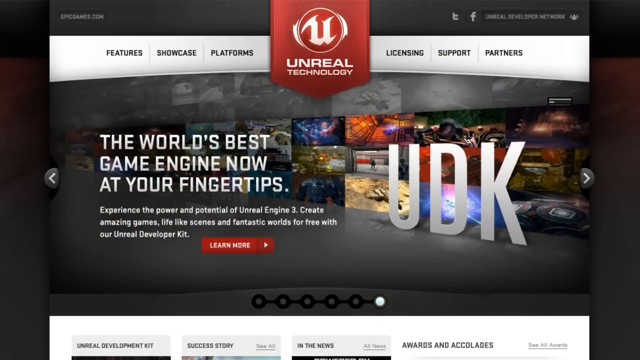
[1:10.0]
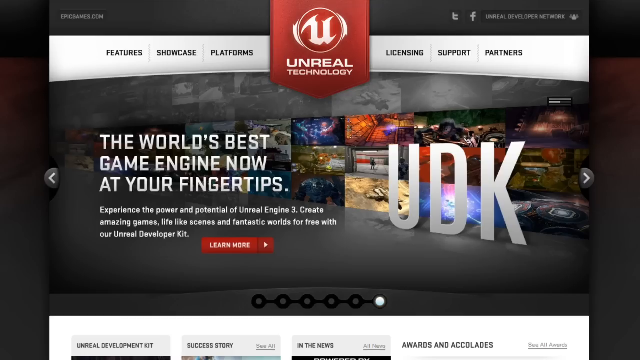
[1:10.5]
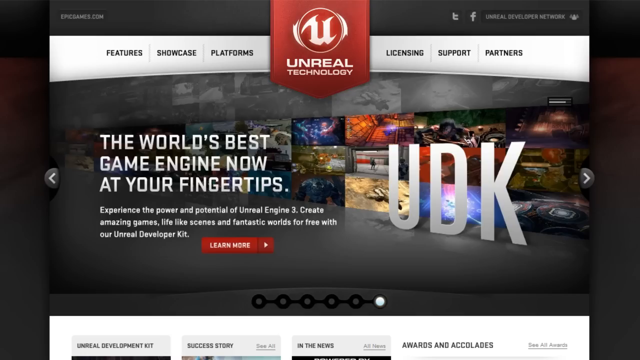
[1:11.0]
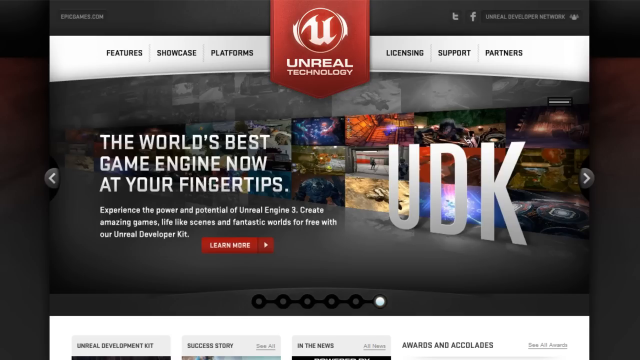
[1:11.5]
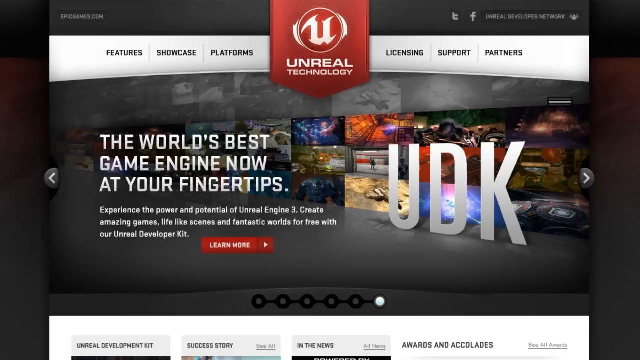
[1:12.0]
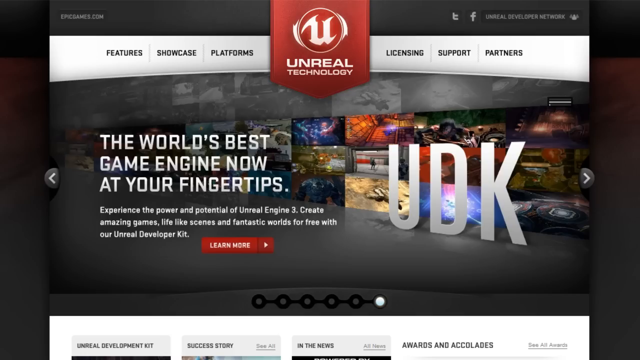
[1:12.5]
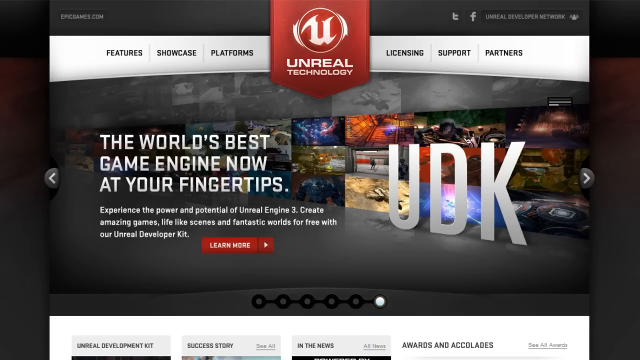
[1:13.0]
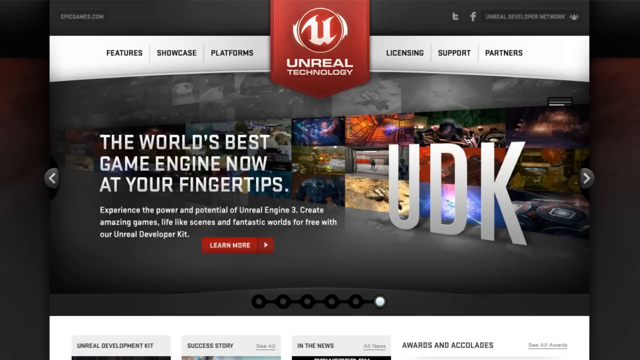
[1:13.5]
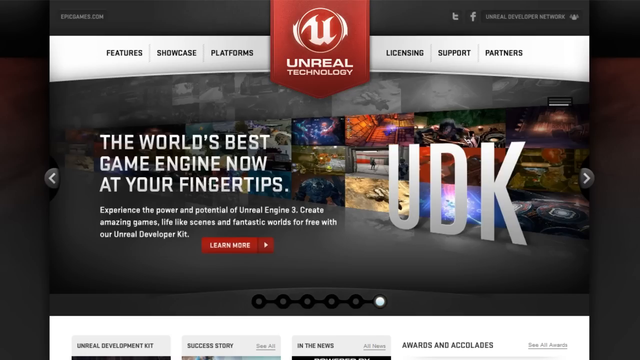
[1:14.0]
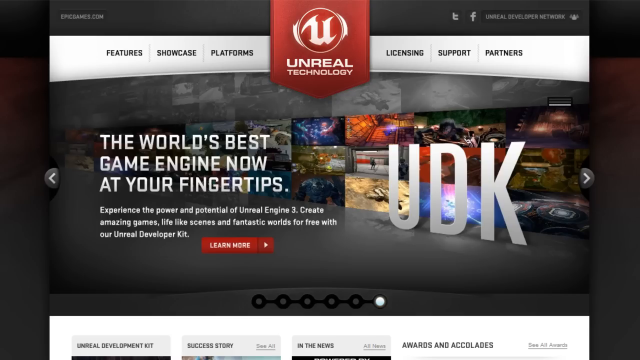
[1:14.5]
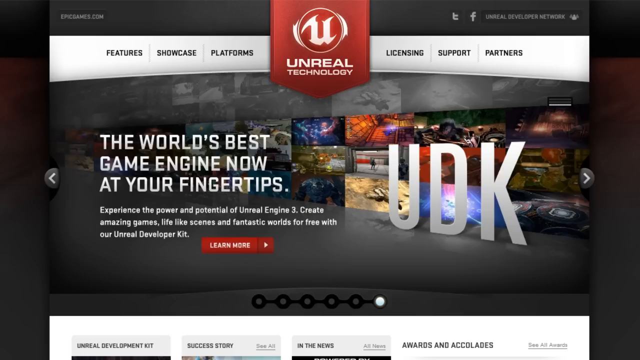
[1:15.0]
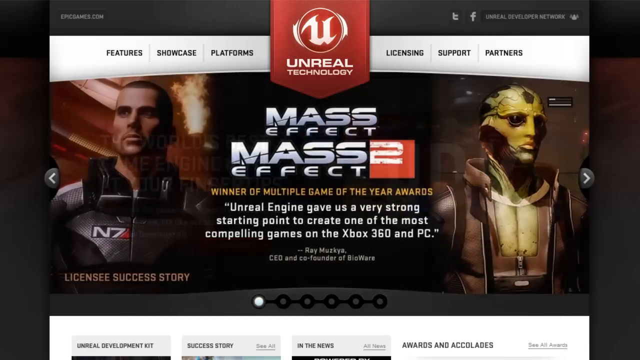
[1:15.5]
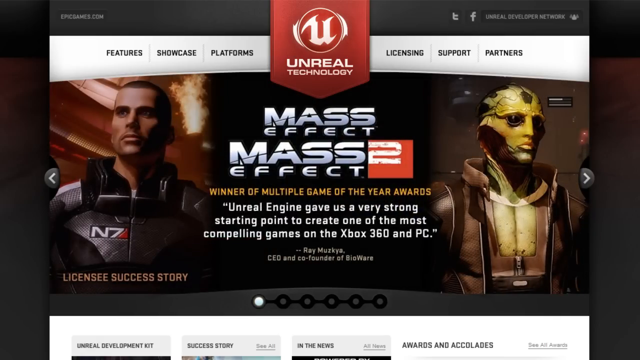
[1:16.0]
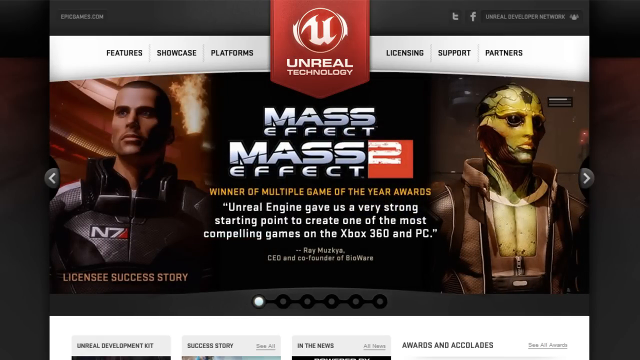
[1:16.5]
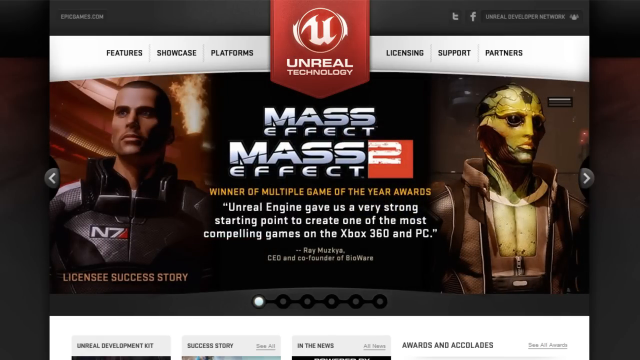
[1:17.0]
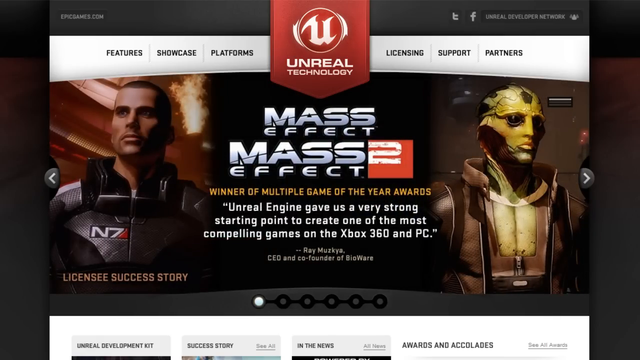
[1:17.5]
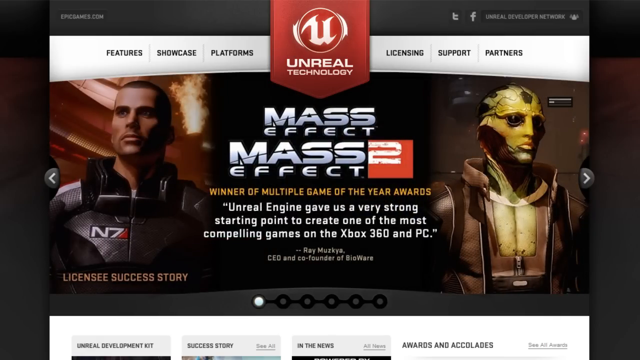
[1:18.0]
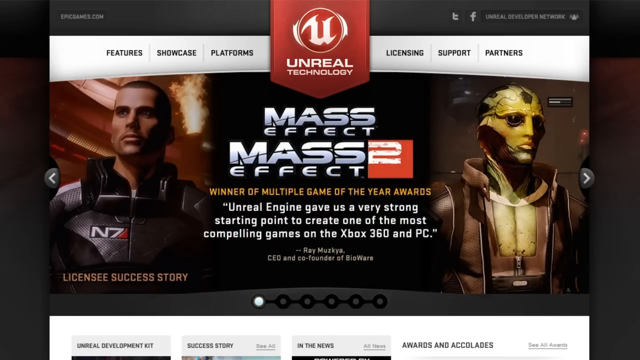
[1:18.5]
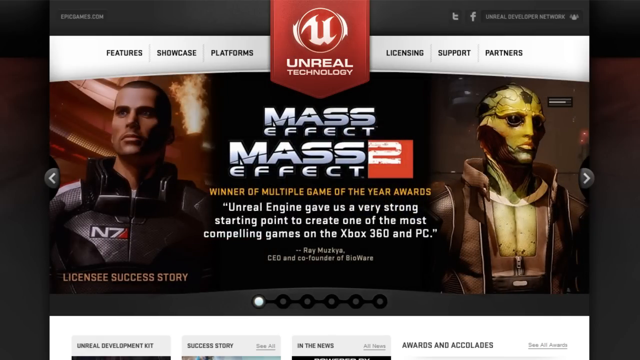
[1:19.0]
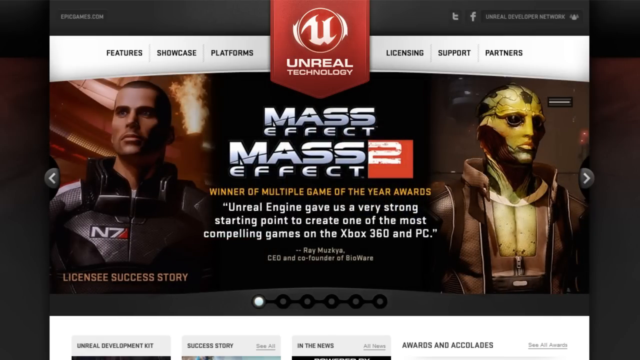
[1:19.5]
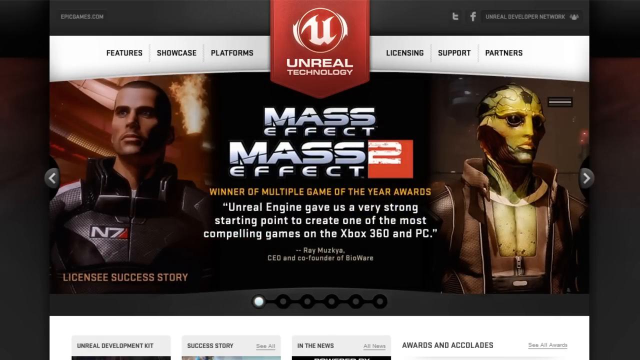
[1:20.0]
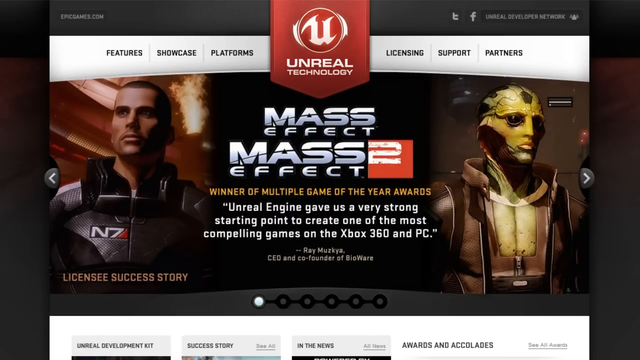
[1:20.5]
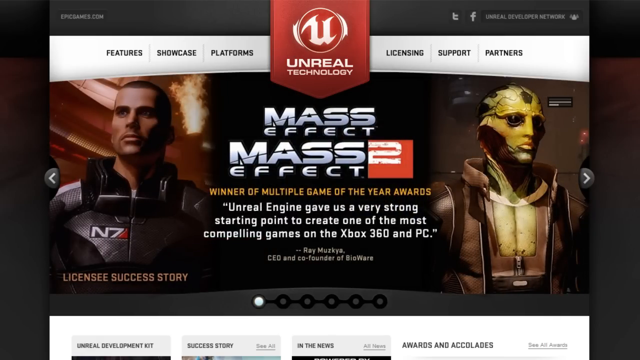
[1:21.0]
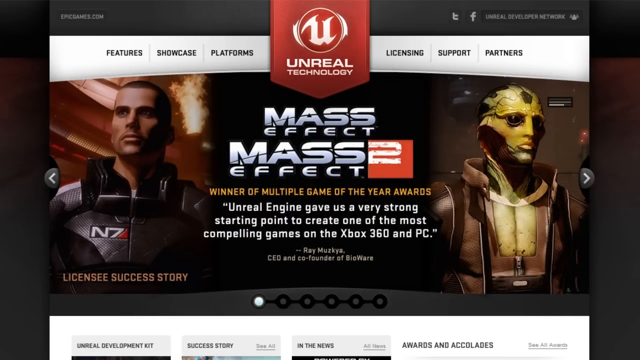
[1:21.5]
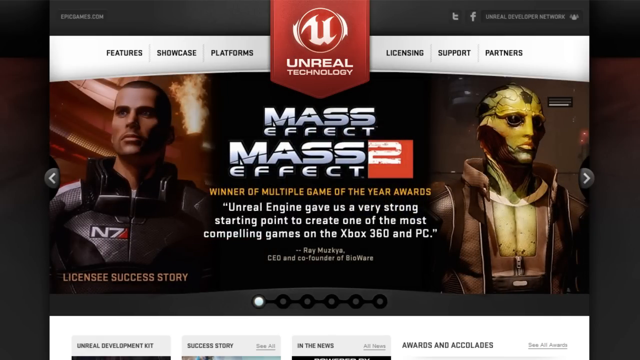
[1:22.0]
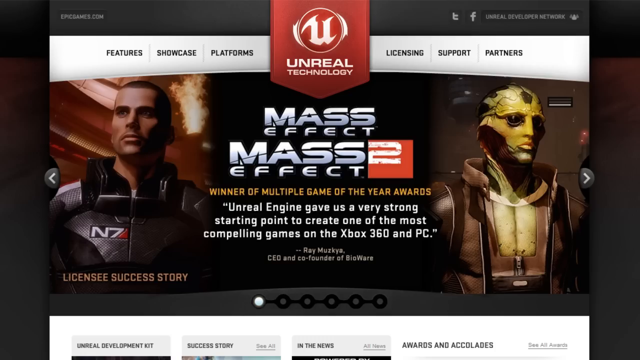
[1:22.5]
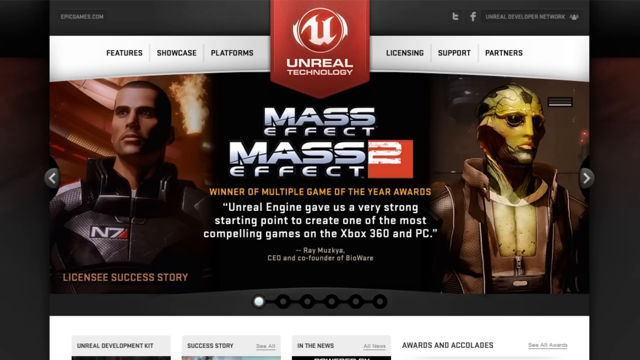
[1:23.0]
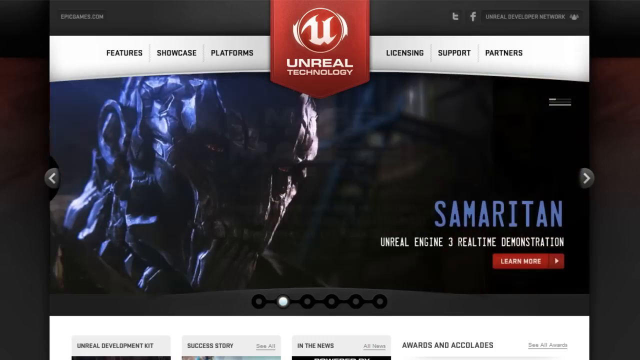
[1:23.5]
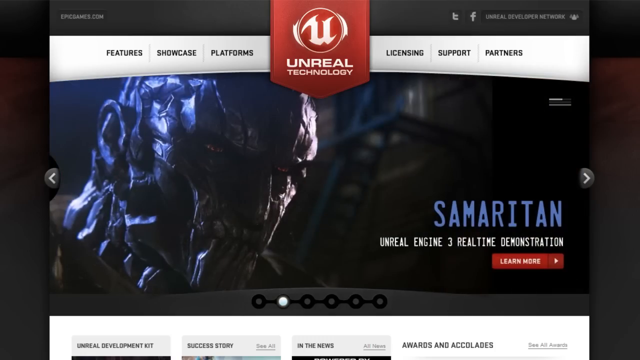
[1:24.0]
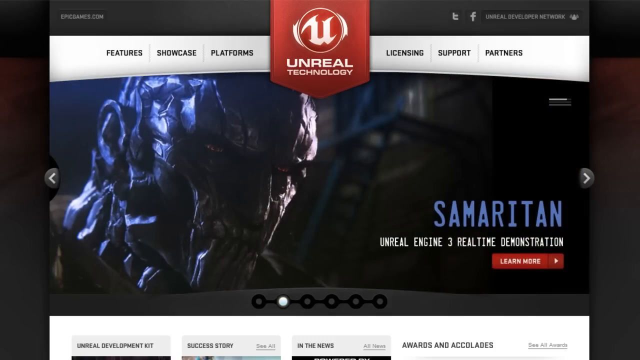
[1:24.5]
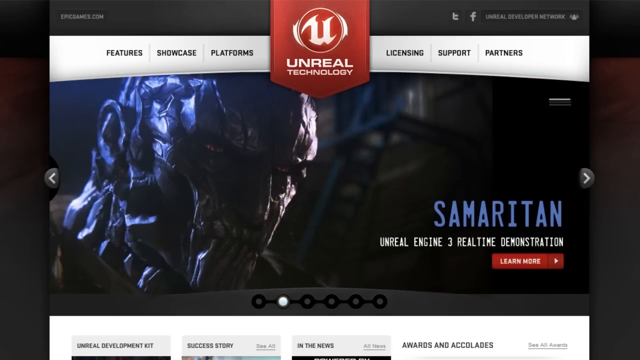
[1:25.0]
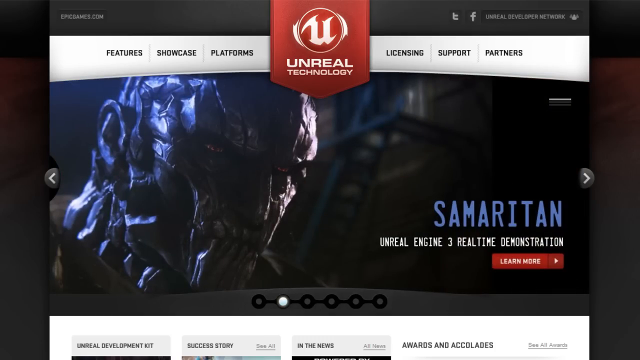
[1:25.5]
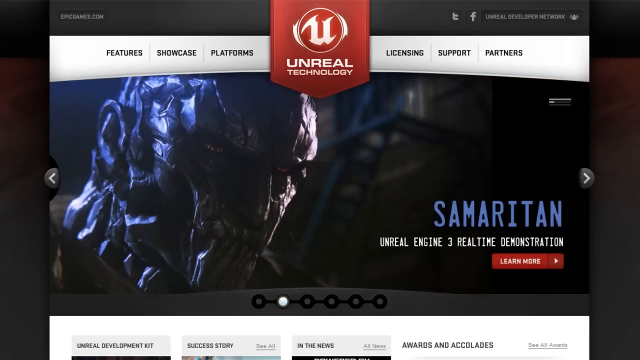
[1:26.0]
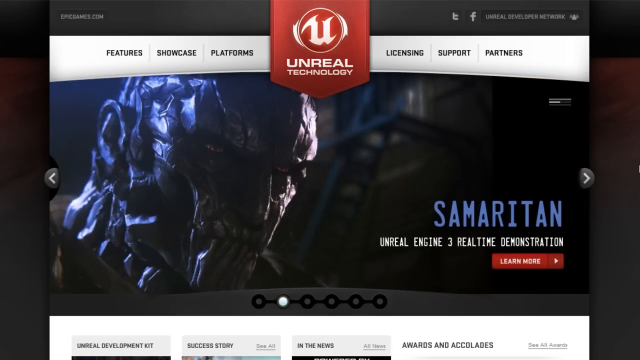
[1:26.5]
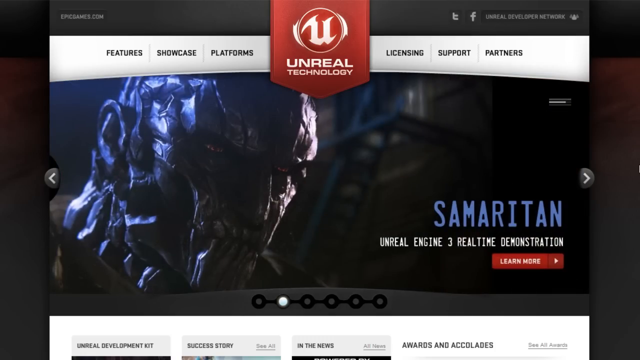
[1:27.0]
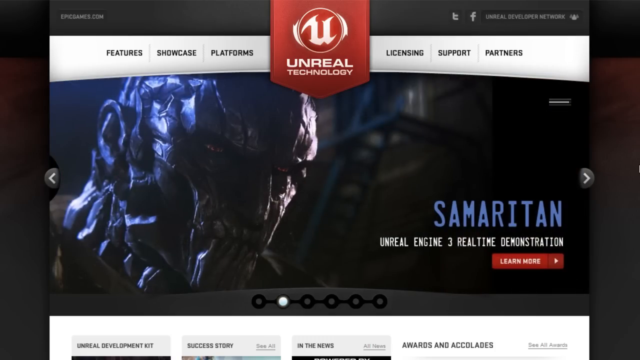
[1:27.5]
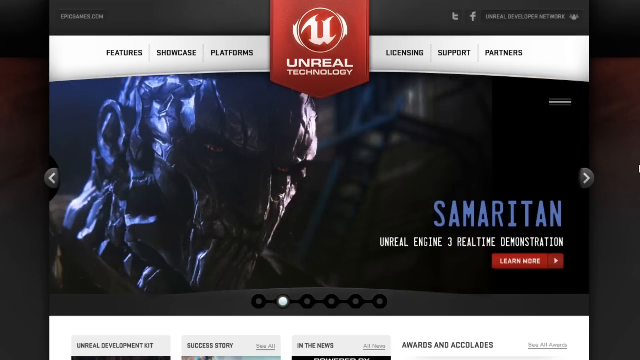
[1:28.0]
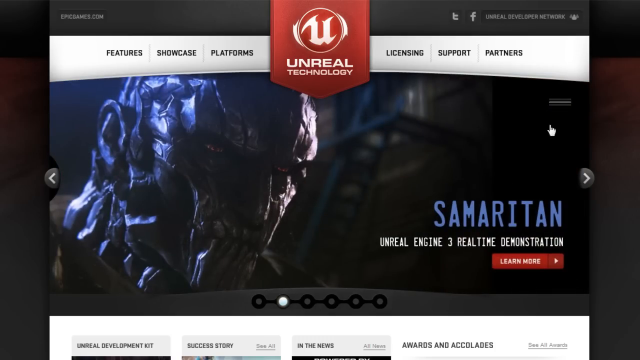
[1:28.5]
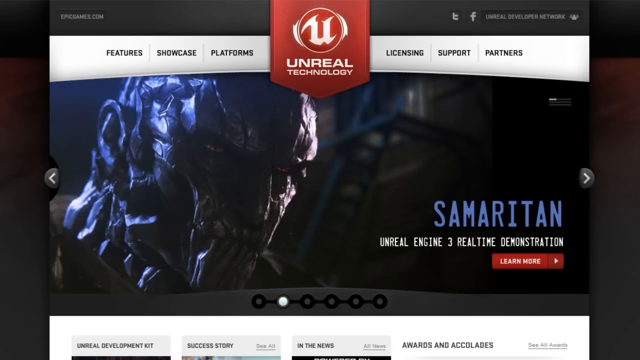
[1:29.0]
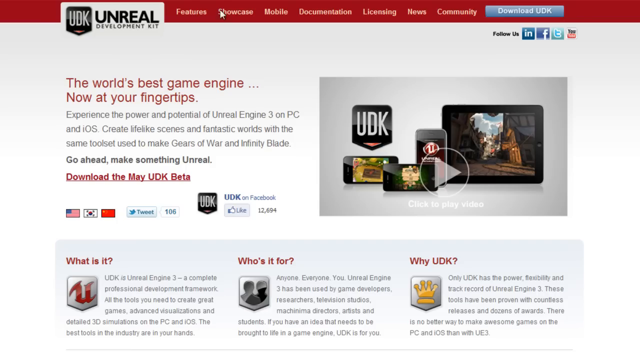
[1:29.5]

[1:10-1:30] The screen stays on the UDK slide for some time before moving back to Mass Effect. On the Mass Effect slide, "licensee success story" appears in orange text in the bottom left, just below the picture of the man from the gameplay, who is looking off to his right and wearing some kind of body armor, with flames in the background. At the top left it says "epicgames.com", and at the top right are the Twitter, Tumblr and Facebook logos and text reading "unreal developer network". At the bottom are tabs such as "in the news", "success story", "unreal development kit" and "awards and accolades". The person then clicks onto a new page, away from the original sliding screen, which has more information.